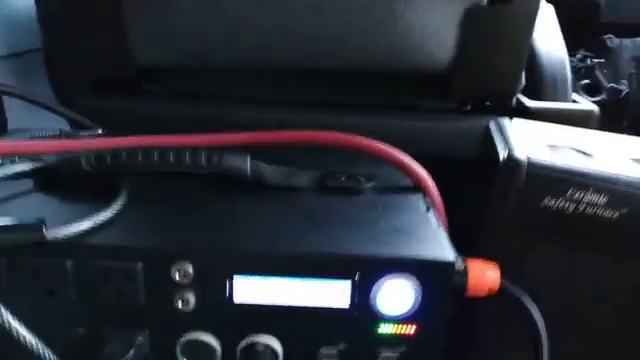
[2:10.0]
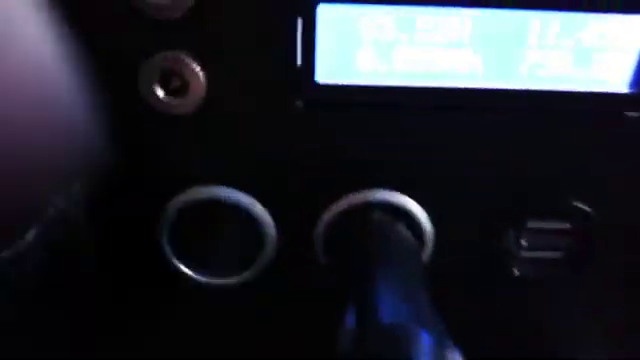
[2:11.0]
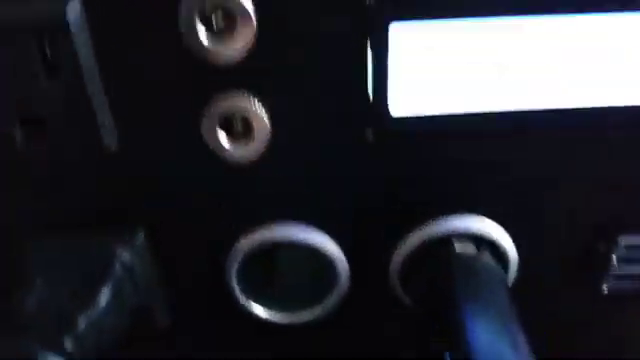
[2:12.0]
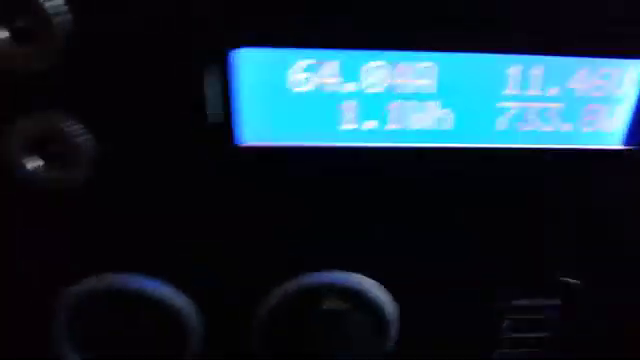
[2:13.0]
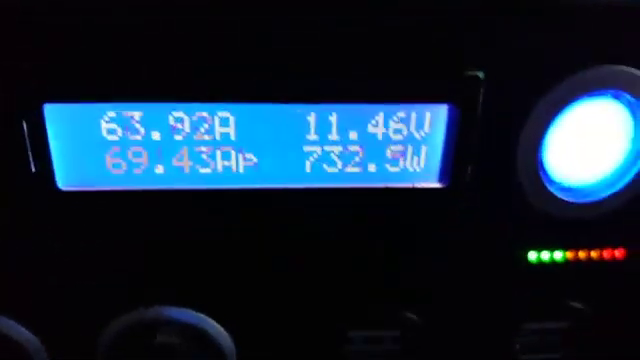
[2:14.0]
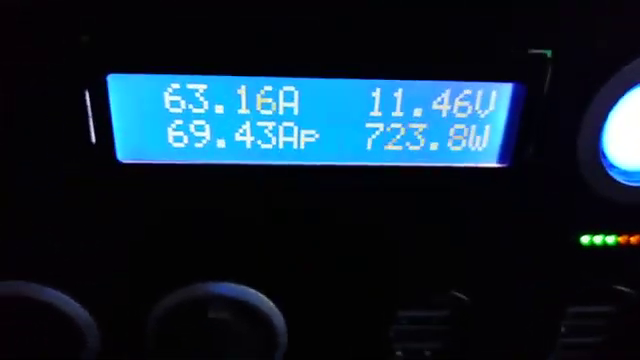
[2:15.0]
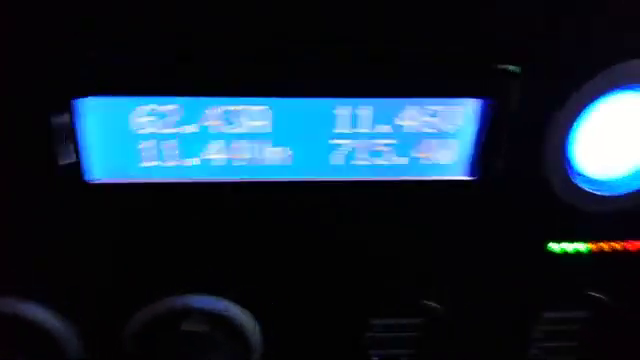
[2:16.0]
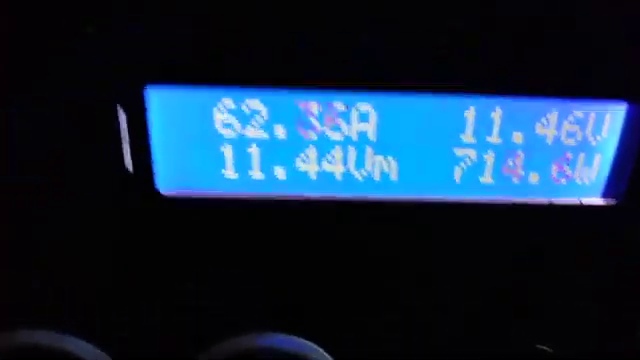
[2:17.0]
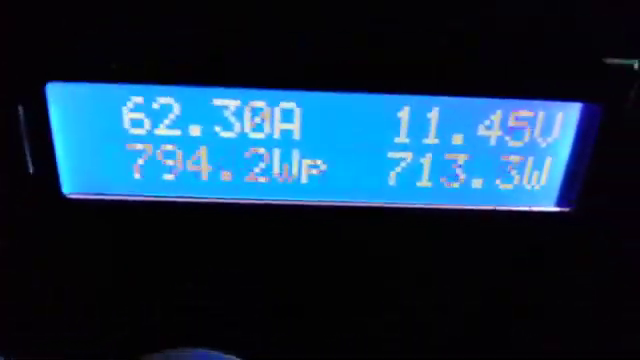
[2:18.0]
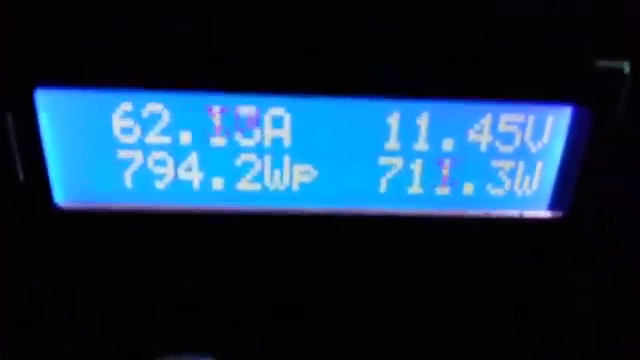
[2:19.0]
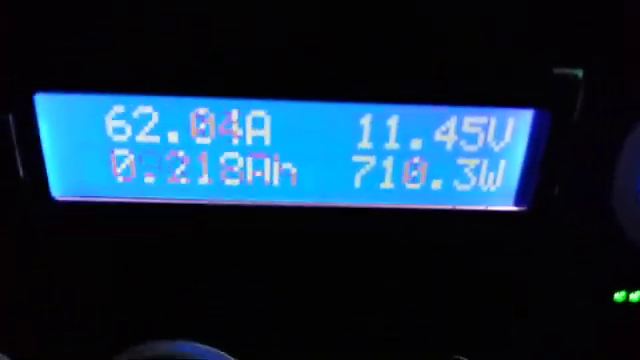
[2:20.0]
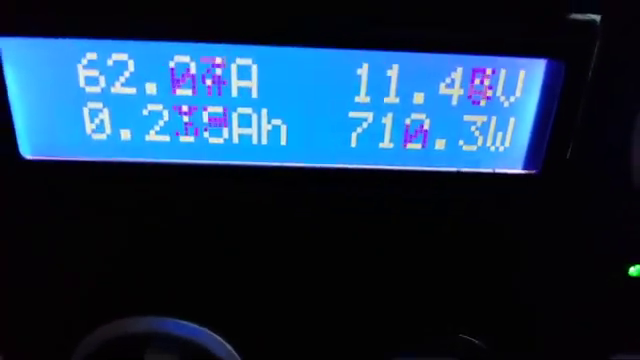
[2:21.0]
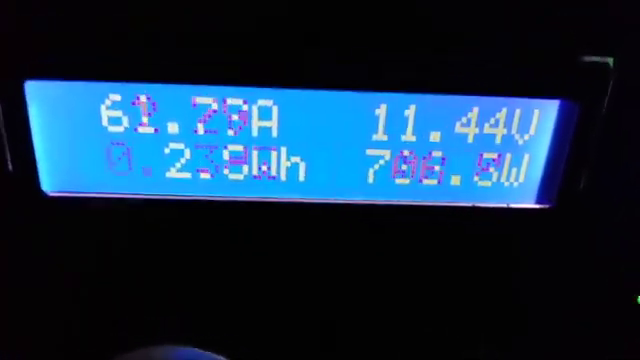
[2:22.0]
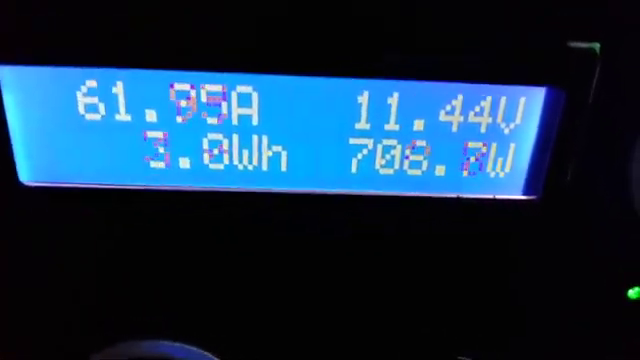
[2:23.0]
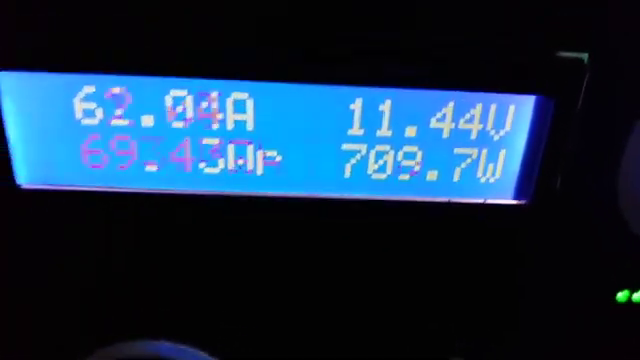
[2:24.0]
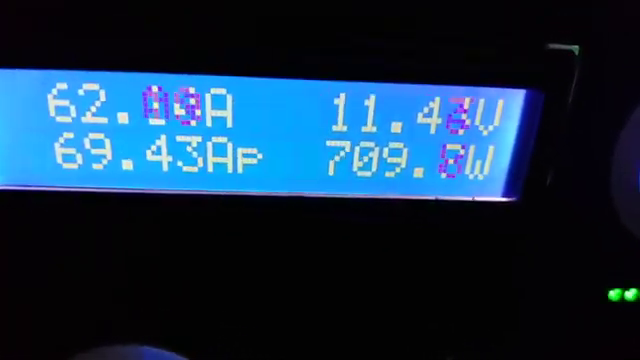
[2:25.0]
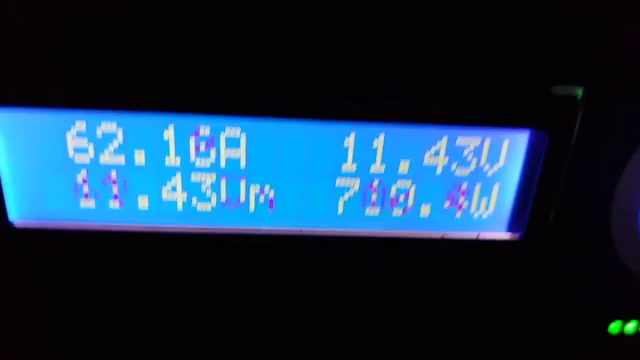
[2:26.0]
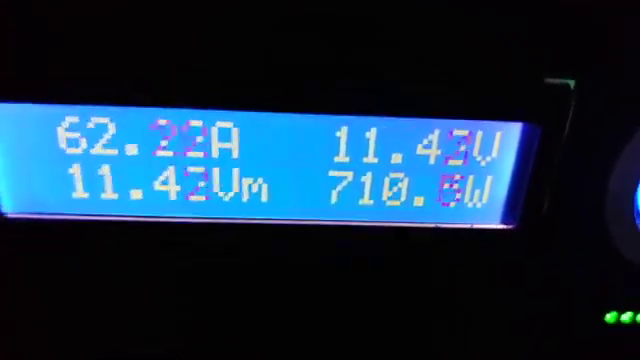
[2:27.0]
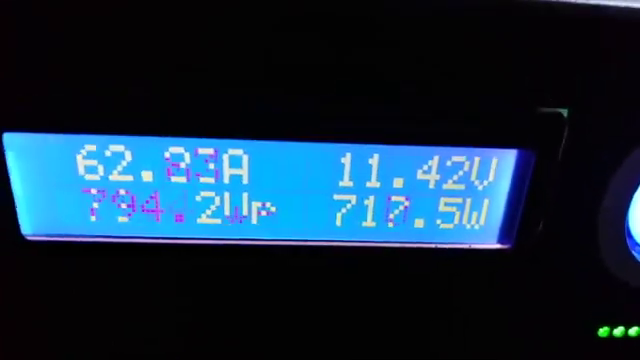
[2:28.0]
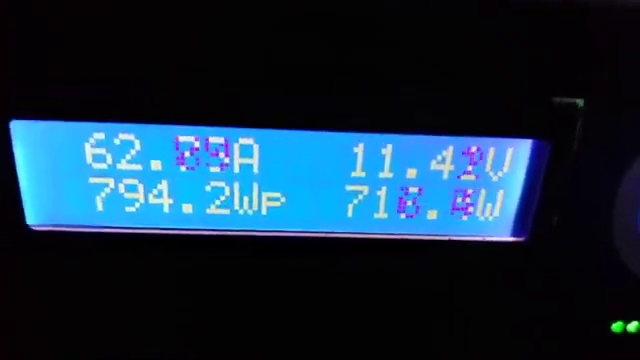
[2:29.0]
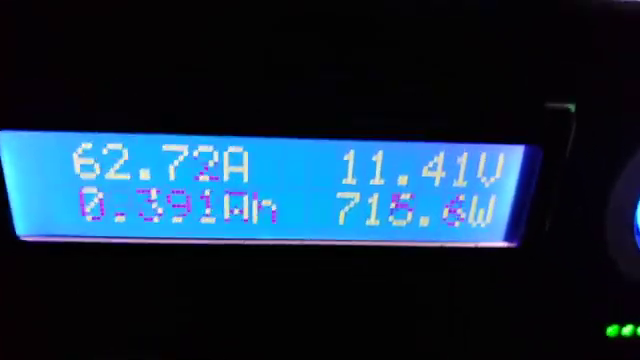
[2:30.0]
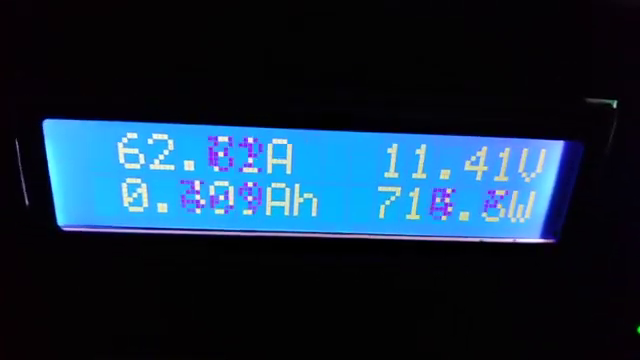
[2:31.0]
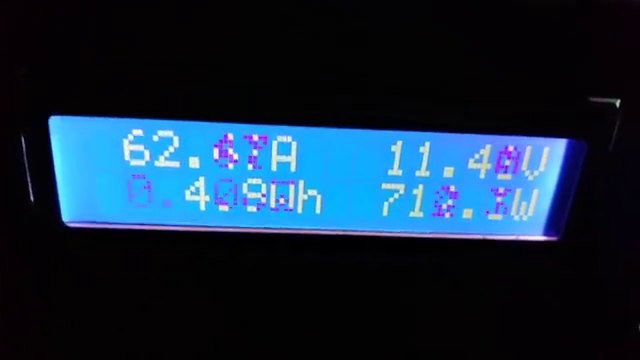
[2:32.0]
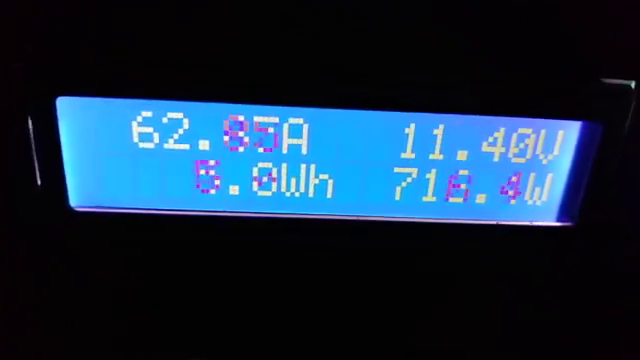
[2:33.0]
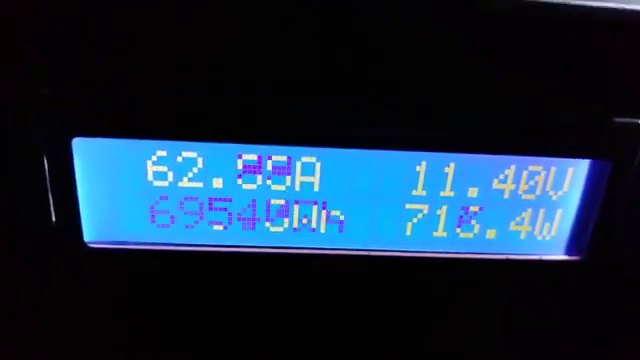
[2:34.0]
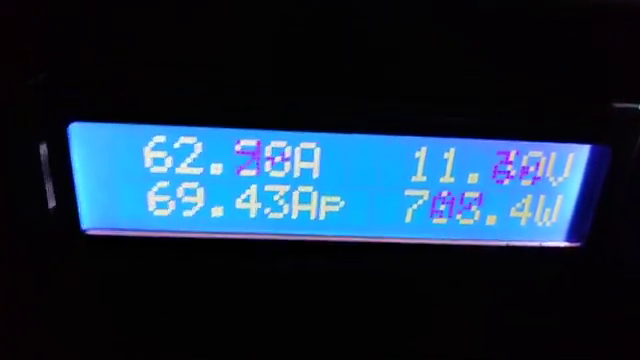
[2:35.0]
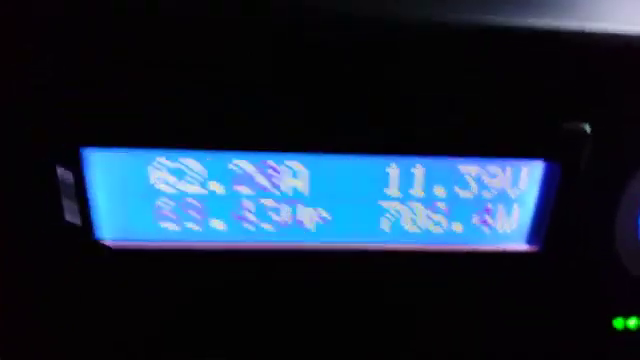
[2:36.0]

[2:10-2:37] The shot is panned out on the box, then focuses in on the green rectangular digital interface. At the top it reads "63.16A" and "11.46V"; underneath it reads "69.43A" followed by what looks like a small F, then "723.8" followed by a V or W. Close up, the numbers are changing. The view pans out again to show the whole box, which has a handle on top. On the right are two three-prong sockets with two more sockets underneath. A red cord runs across the top of the box and over the handle. The box is probably brought along in the van for plugging in electronics.